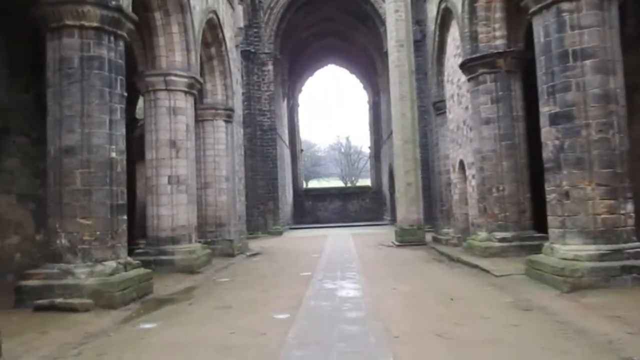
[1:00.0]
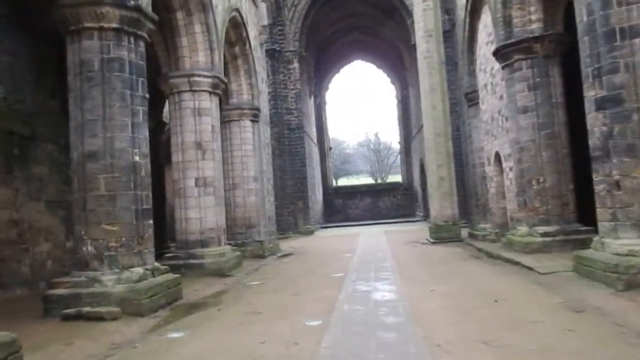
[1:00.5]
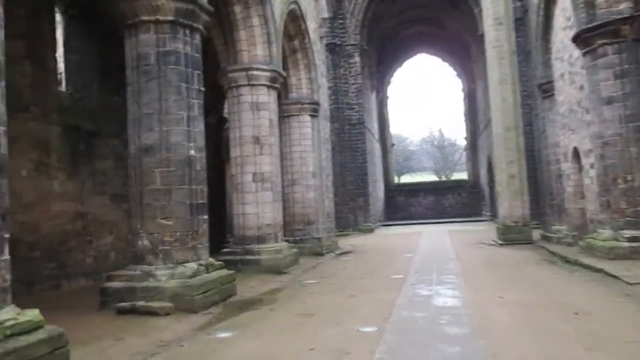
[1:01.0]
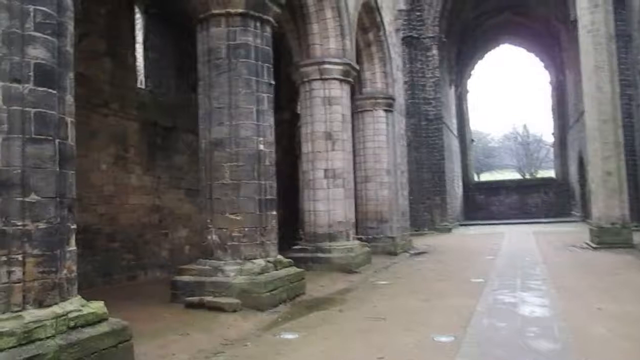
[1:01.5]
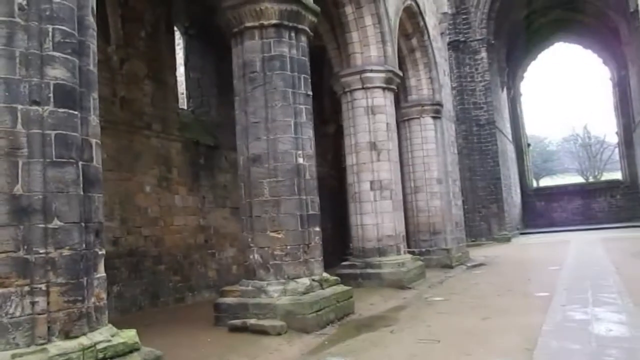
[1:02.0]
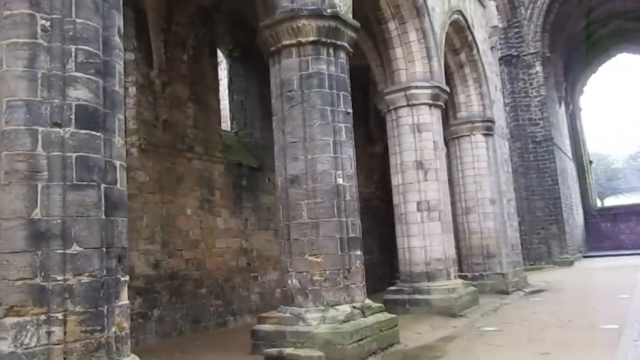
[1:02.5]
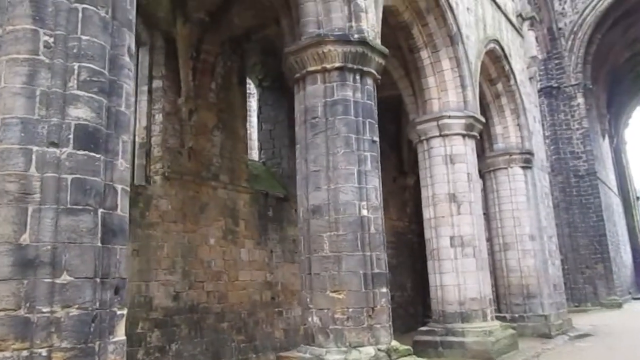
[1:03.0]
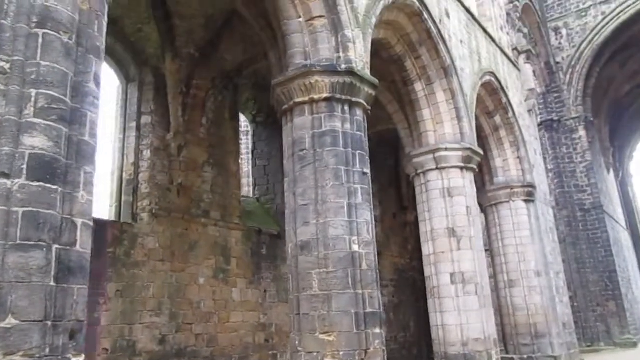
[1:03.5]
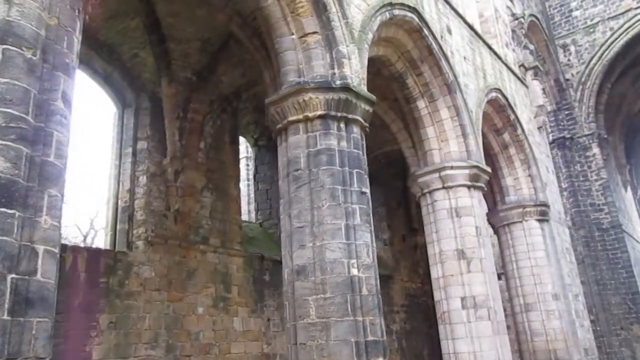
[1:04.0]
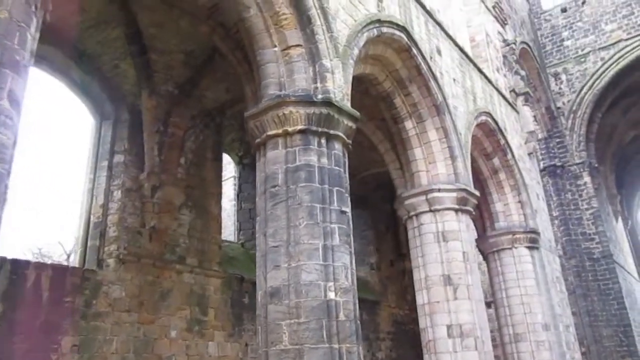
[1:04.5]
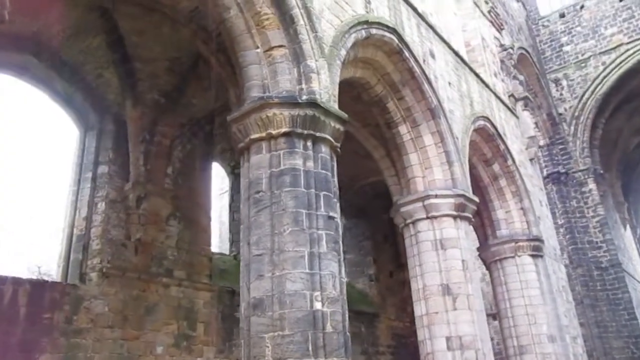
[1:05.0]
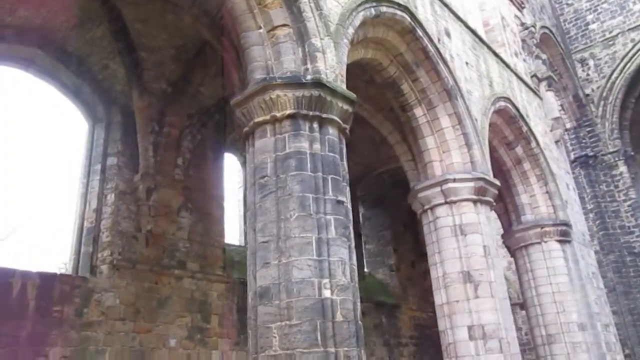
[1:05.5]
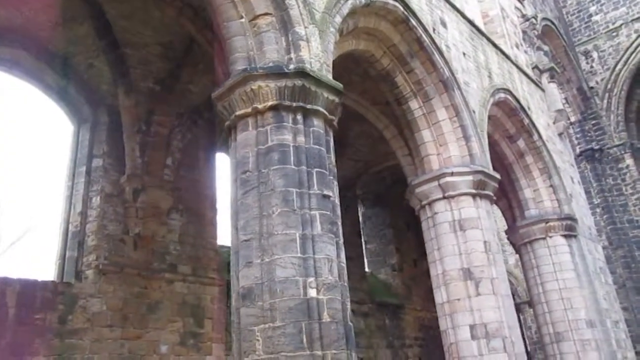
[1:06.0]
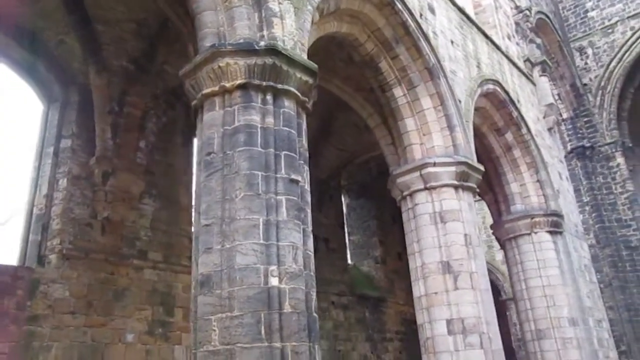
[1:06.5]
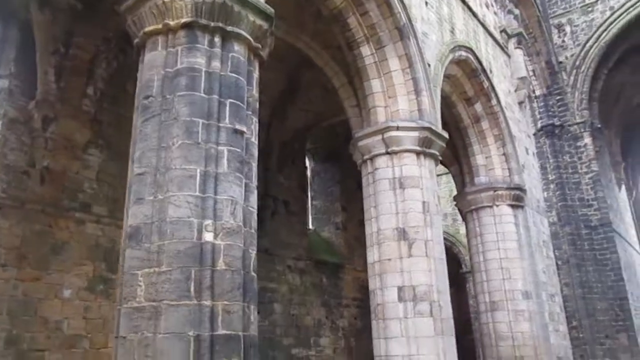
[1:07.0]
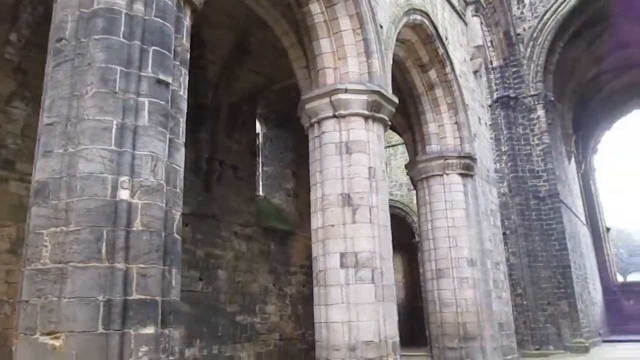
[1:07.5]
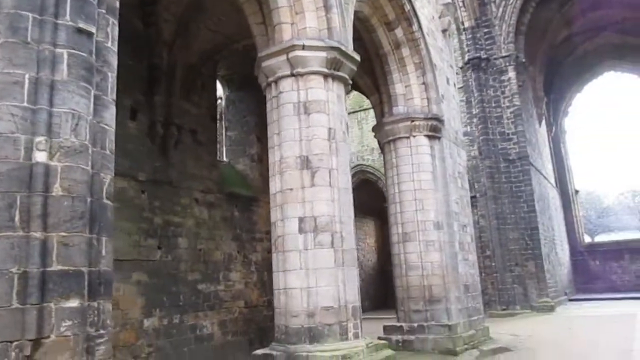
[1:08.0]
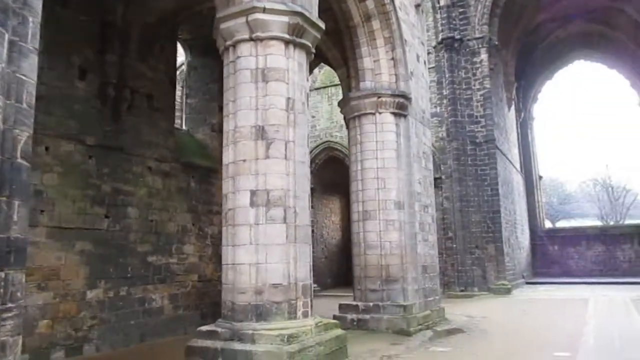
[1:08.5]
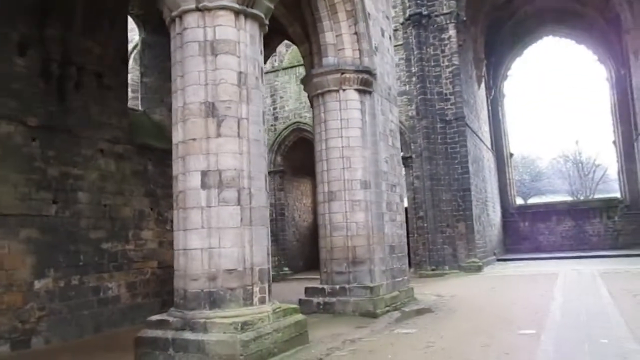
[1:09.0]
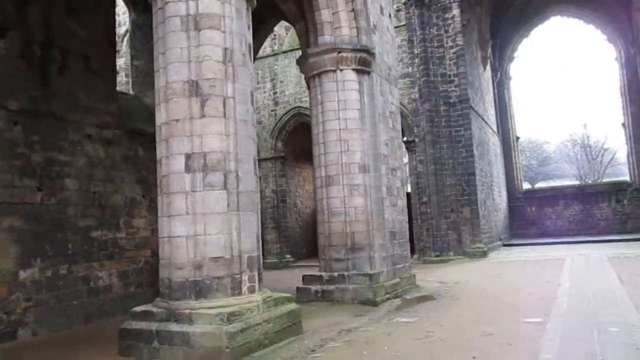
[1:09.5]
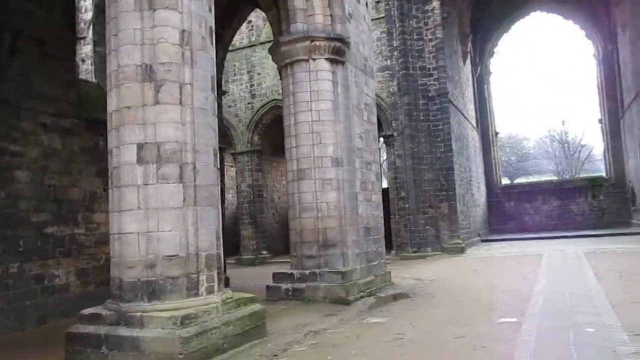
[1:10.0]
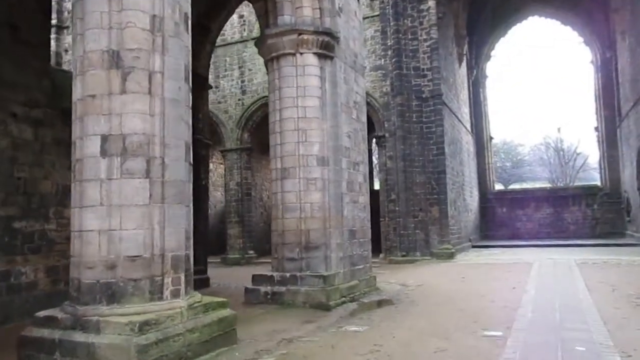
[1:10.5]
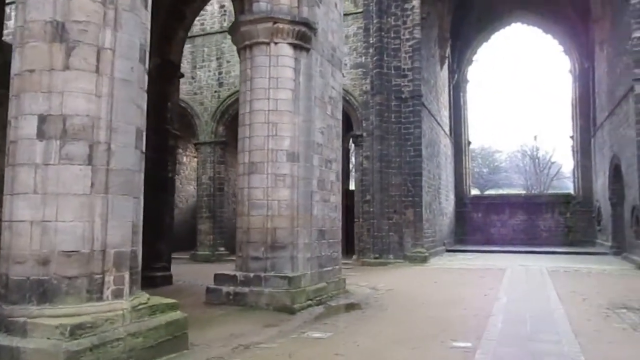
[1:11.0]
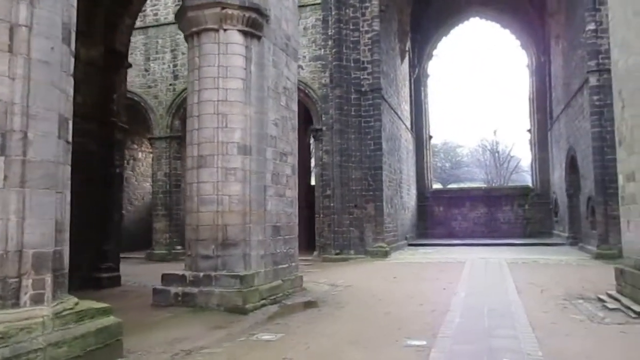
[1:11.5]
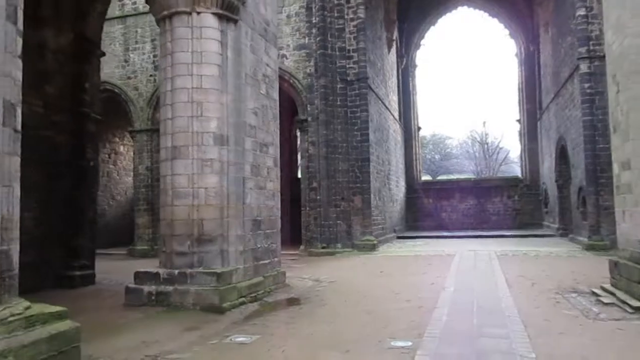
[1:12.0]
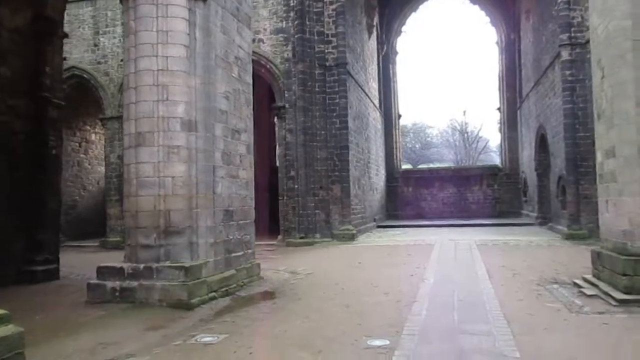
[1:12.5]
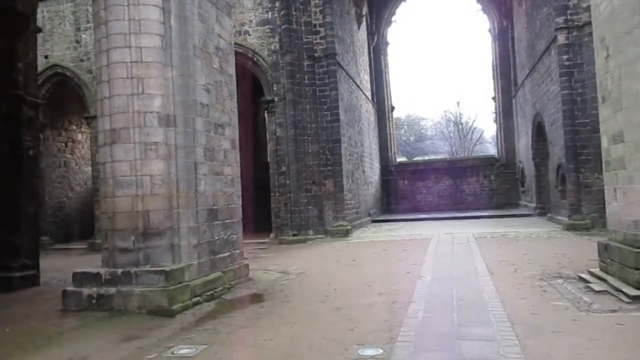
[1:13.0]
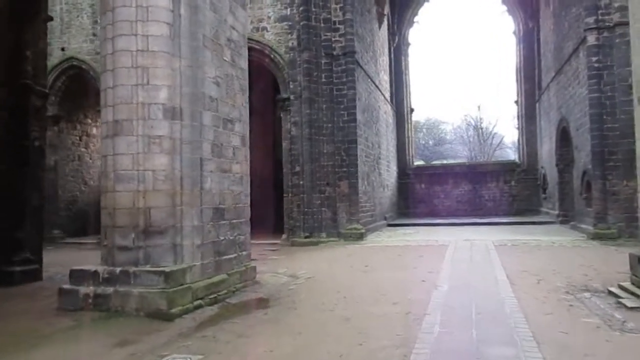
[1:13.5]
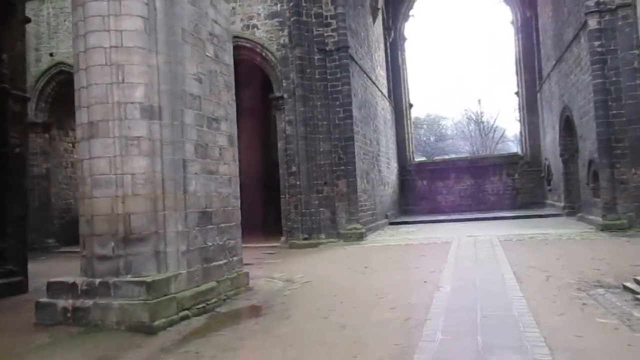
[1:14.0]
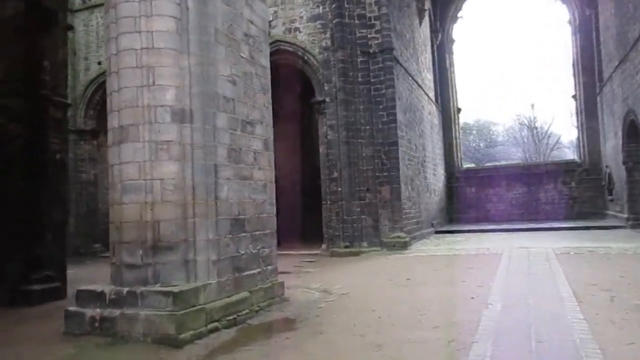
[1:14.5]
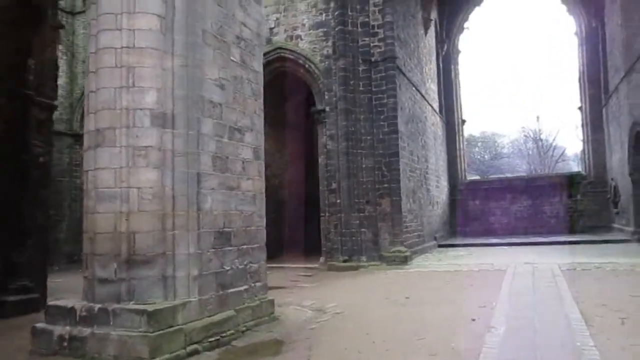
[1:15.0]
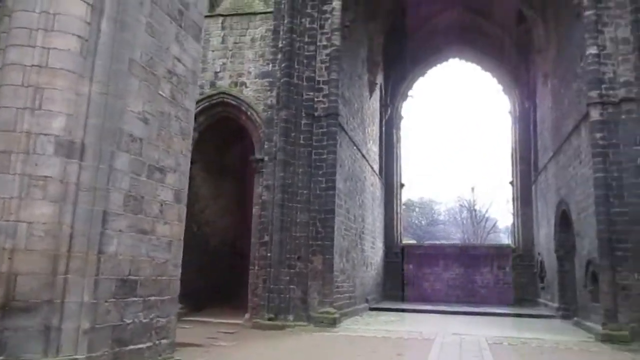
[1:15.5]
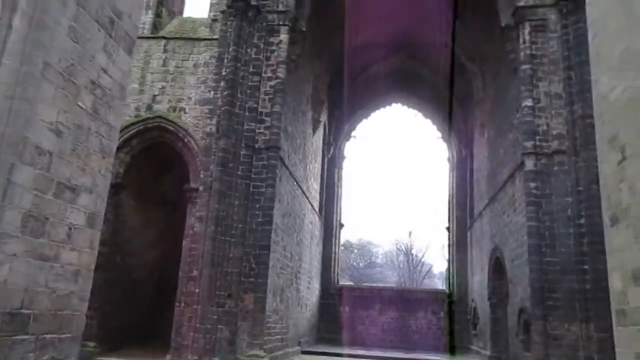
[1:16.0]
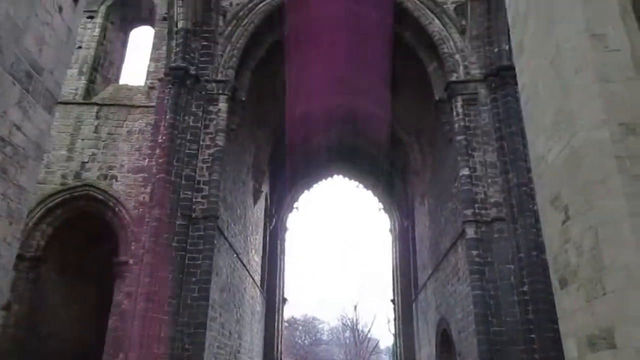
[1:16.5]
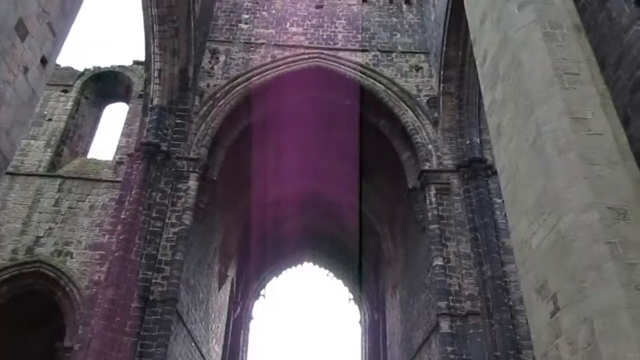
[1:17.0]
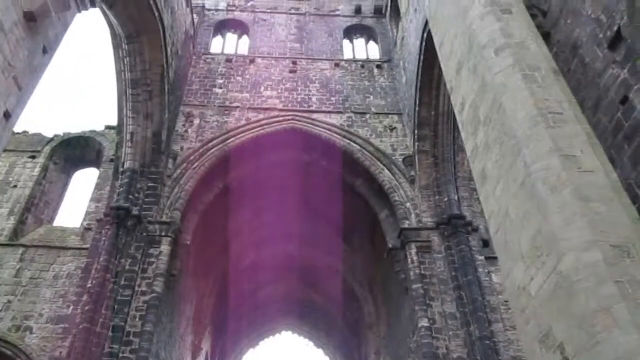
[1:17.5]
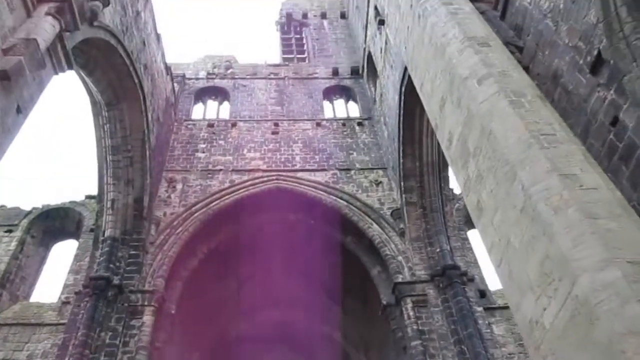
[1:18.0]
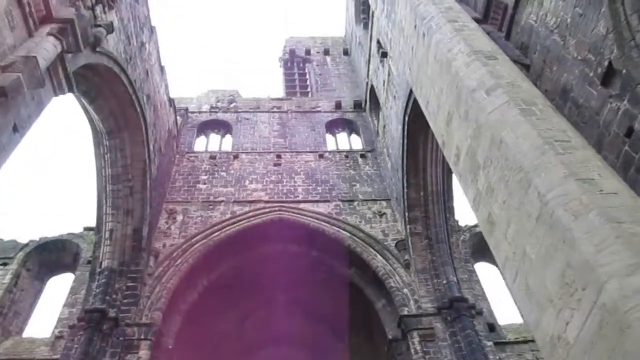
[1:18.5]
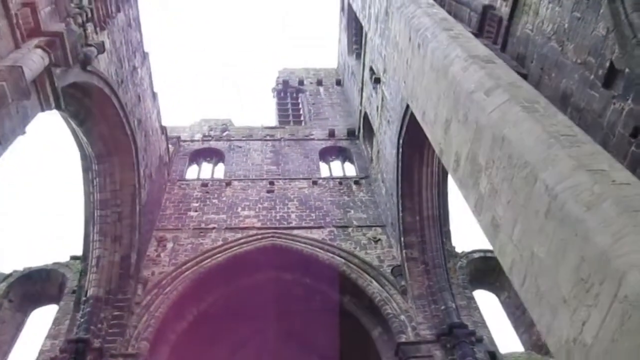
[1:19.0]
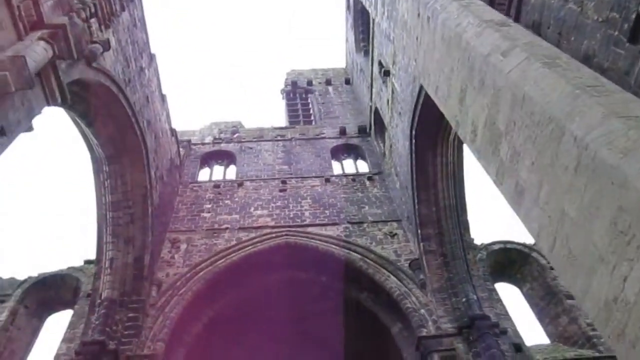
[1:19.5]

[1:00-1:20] The person keeps walking toward the gate. While walking, they pan the camera slightly to the left, showing one of the pillars, which looks somewhat better preserved and darker than the other pillars, and point directly at where the pillar meets the archway. They then pan back to the right, where there appears to be another walkway extending off toward the left side, possibly leading to another similar hallway with archways on both sides. Walking forward, they point the camera back toward the gate, and the glare of the sunlight is visible in the camera. It now appears that there is a small wall below the archway separating it from the outside, so it looks more like a window than a gate. There is a small door on the right side of this structure; it is unclear whether it is only a doorway or whether there is a door there. The camera then tilts up again to show the top of the gate-like structure.